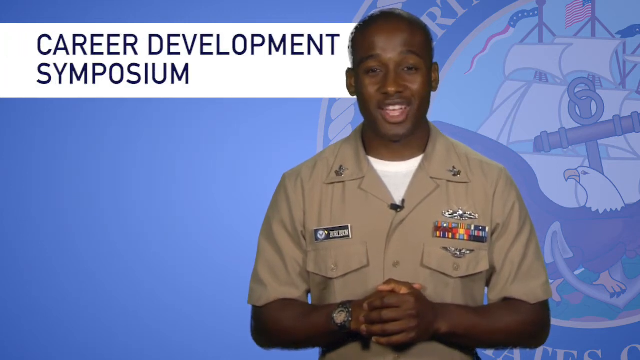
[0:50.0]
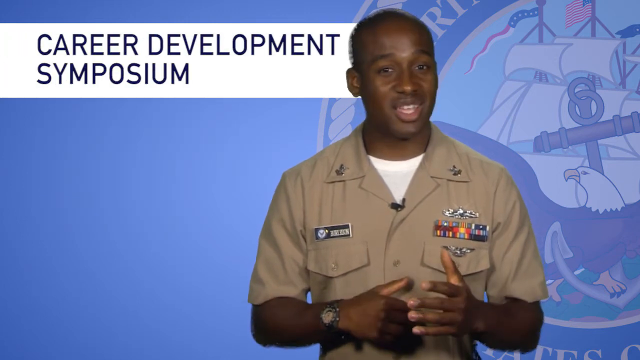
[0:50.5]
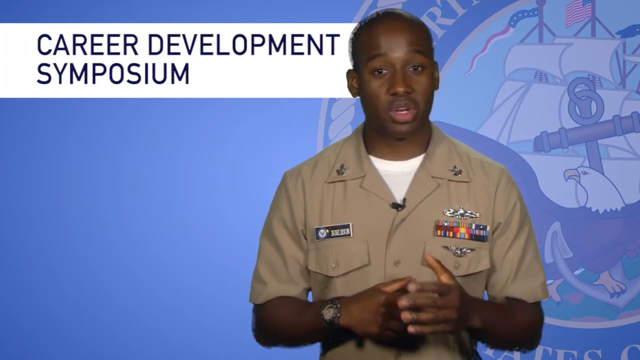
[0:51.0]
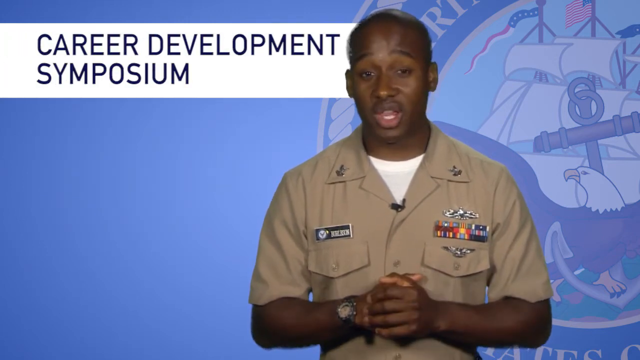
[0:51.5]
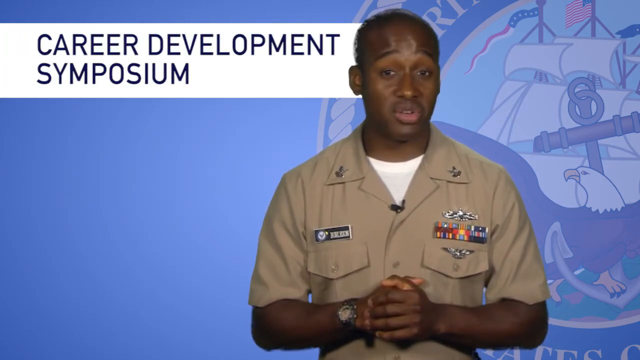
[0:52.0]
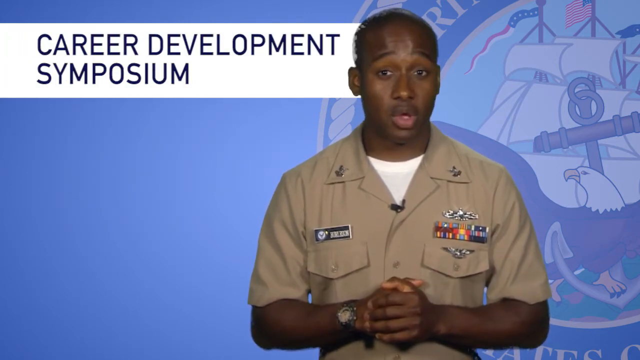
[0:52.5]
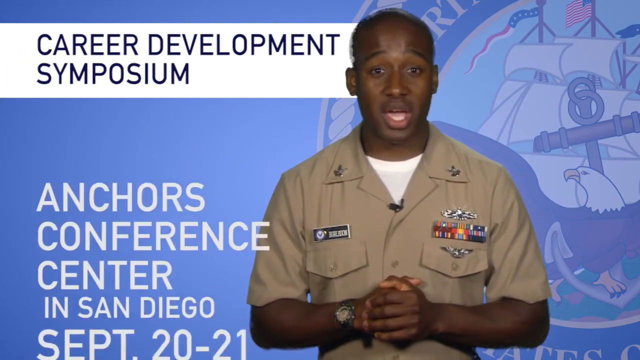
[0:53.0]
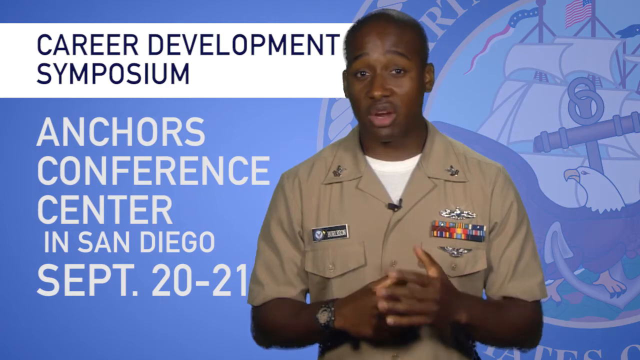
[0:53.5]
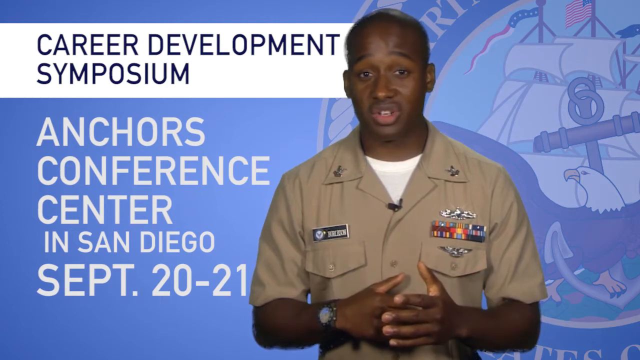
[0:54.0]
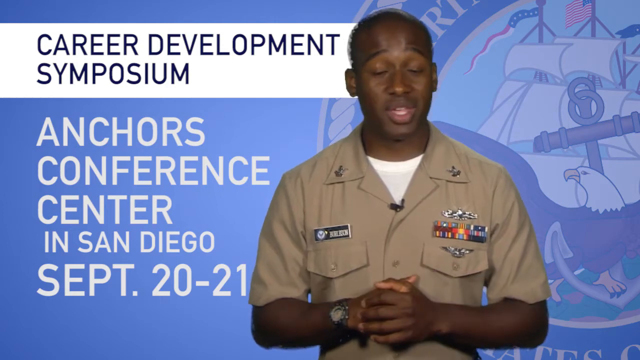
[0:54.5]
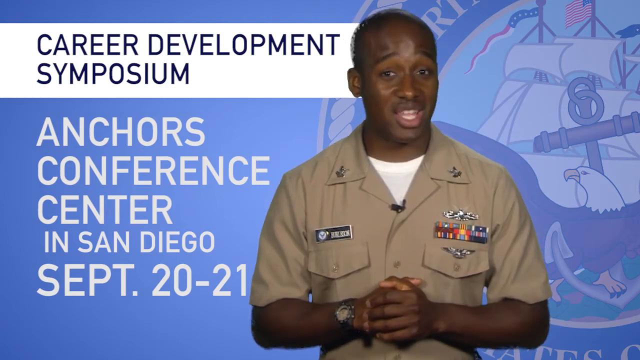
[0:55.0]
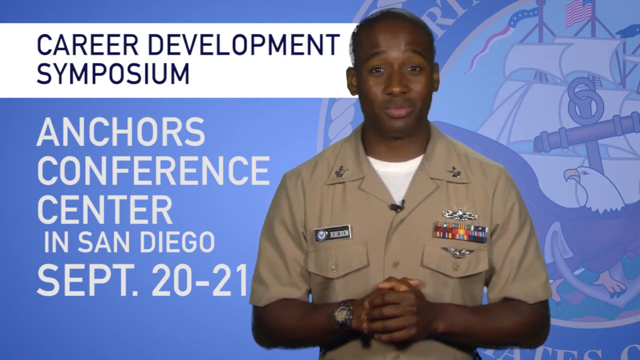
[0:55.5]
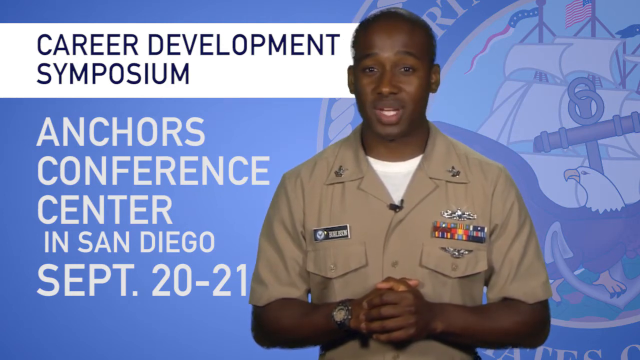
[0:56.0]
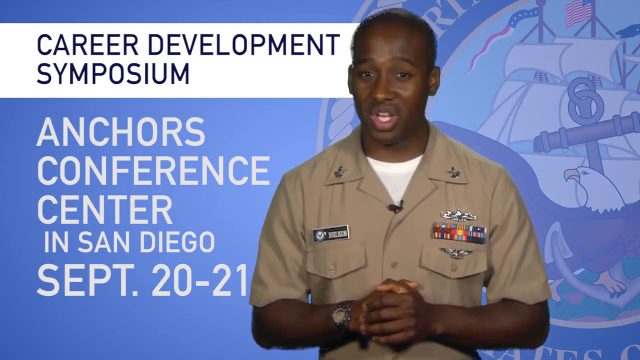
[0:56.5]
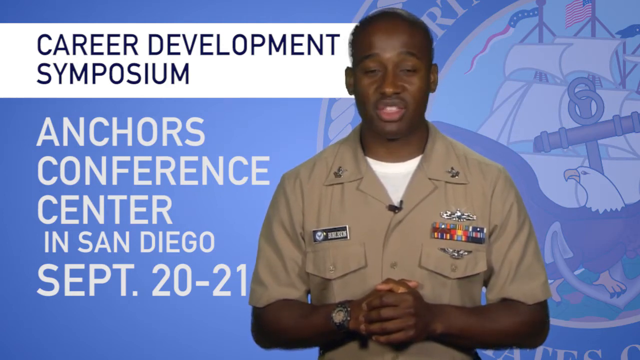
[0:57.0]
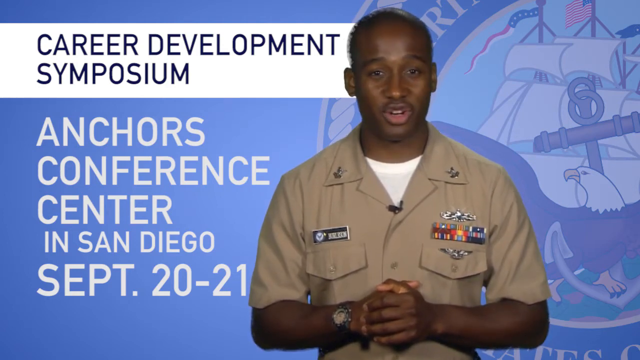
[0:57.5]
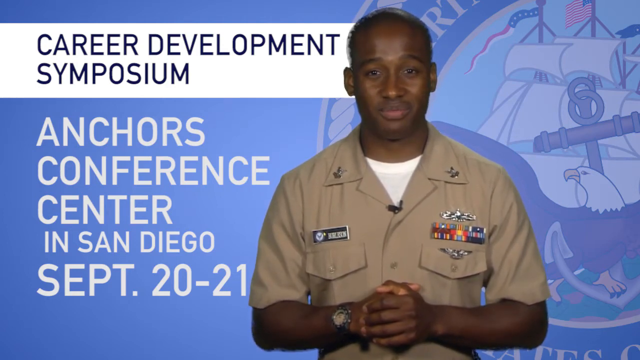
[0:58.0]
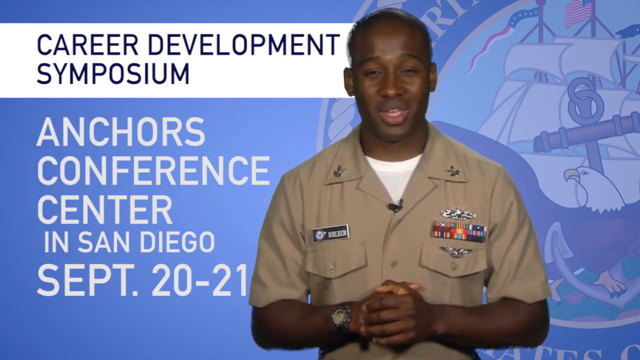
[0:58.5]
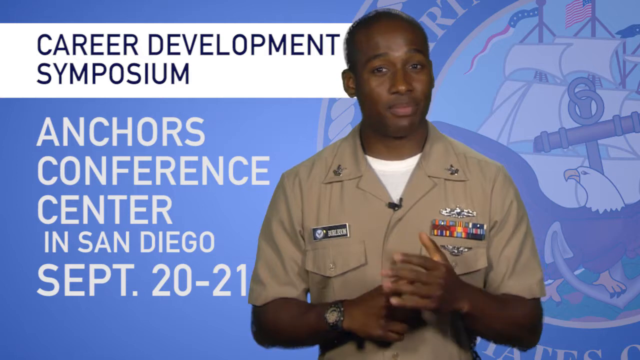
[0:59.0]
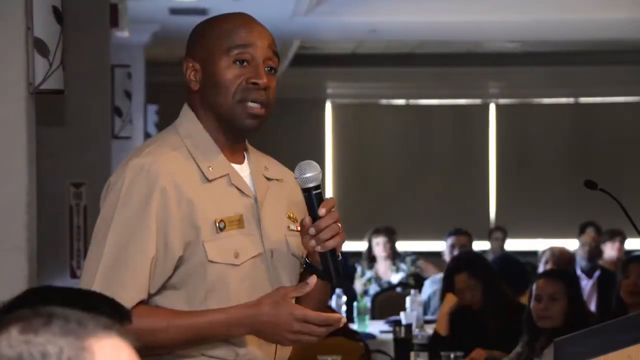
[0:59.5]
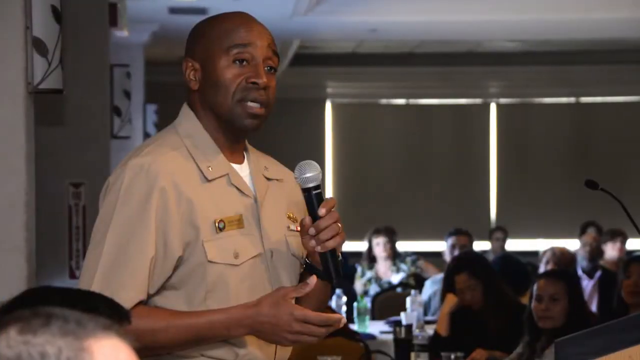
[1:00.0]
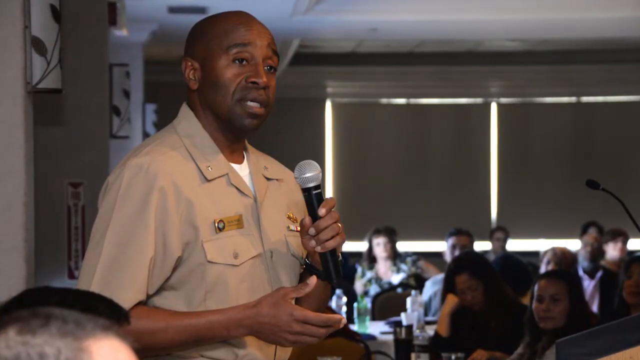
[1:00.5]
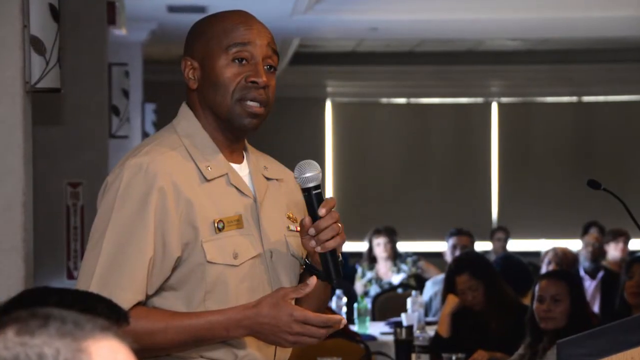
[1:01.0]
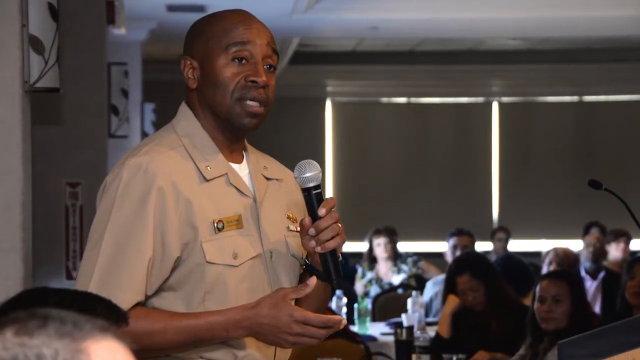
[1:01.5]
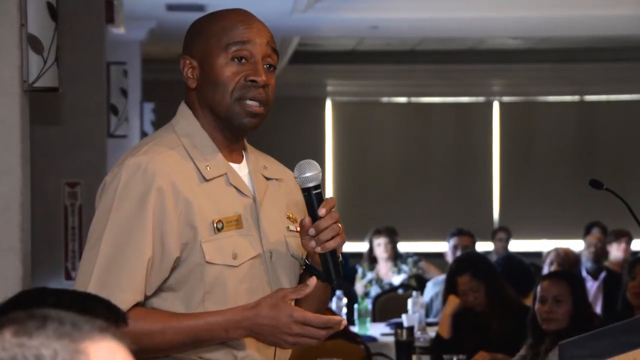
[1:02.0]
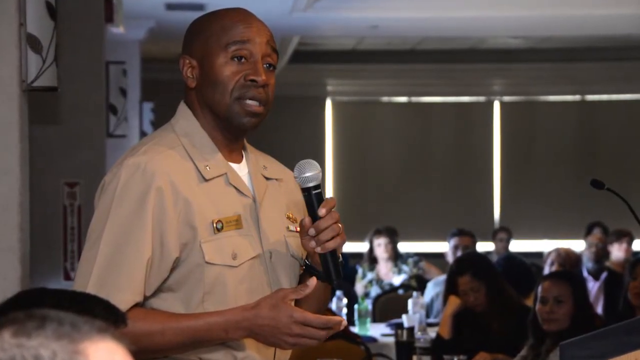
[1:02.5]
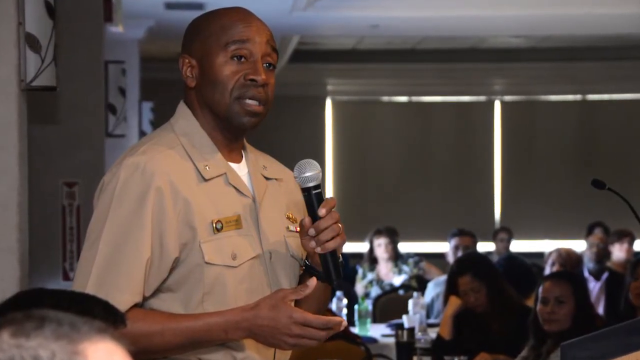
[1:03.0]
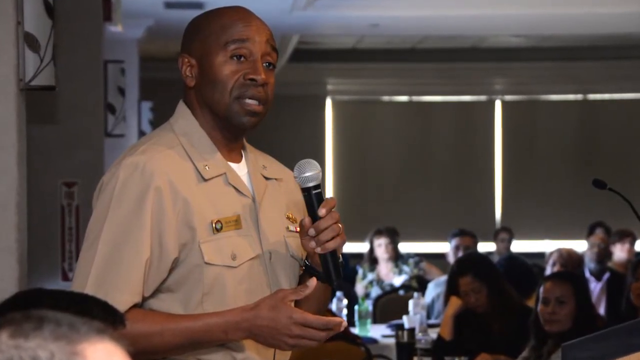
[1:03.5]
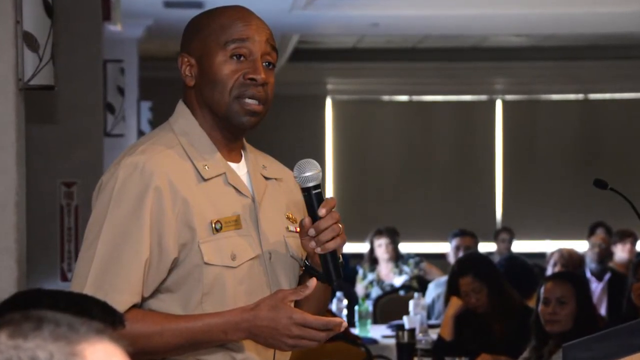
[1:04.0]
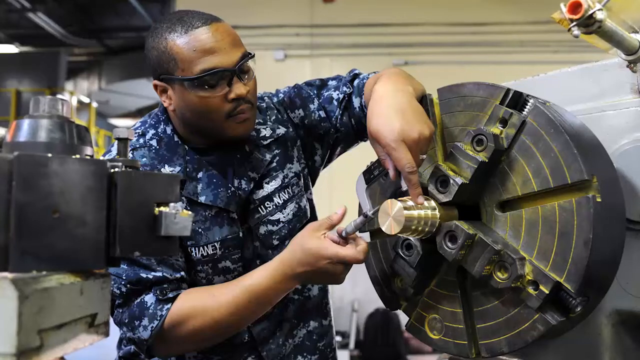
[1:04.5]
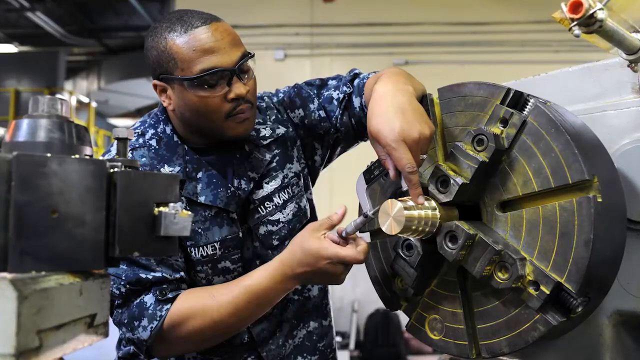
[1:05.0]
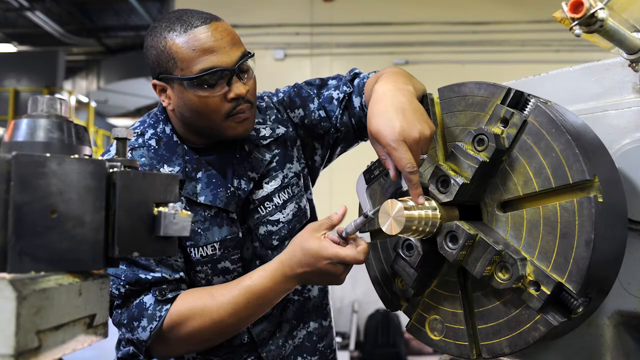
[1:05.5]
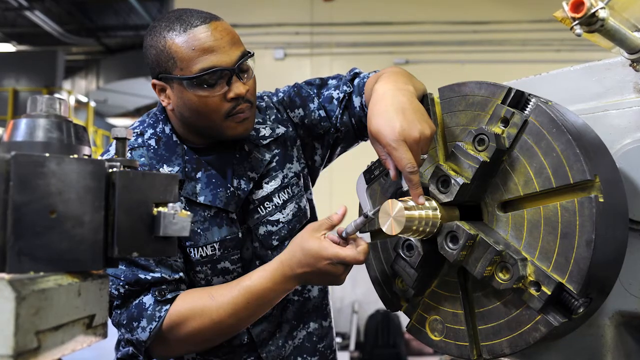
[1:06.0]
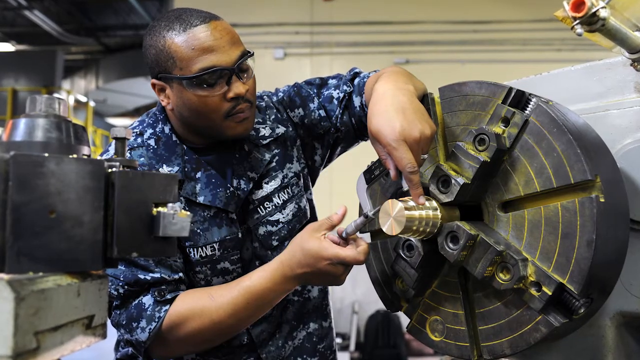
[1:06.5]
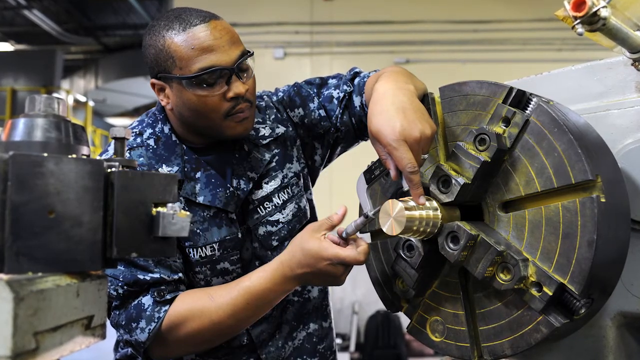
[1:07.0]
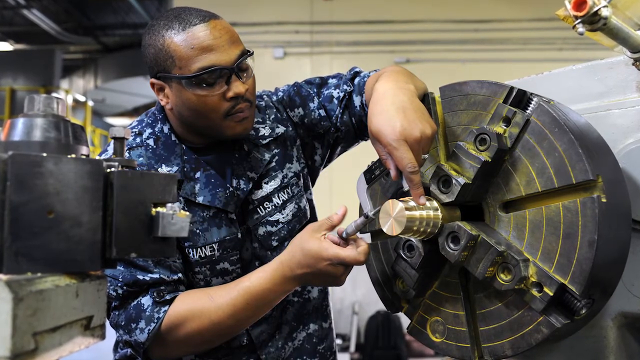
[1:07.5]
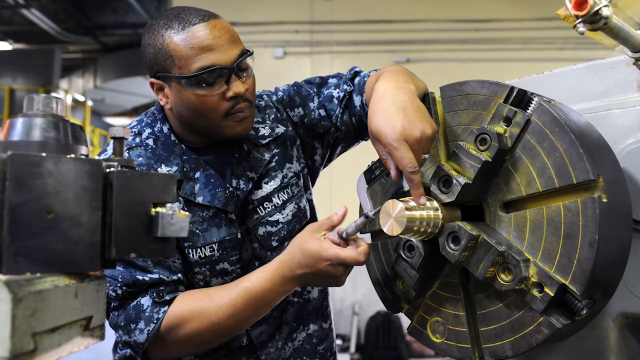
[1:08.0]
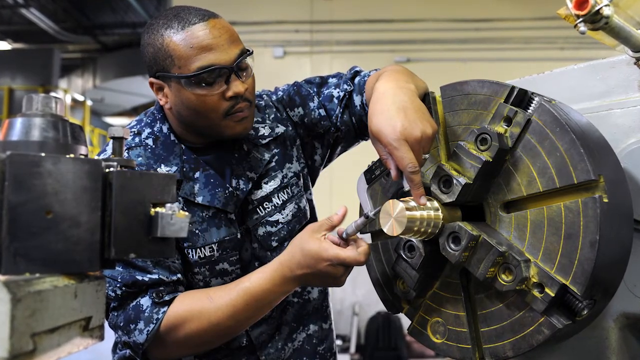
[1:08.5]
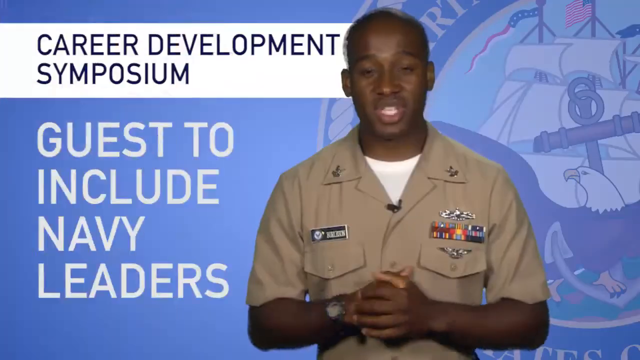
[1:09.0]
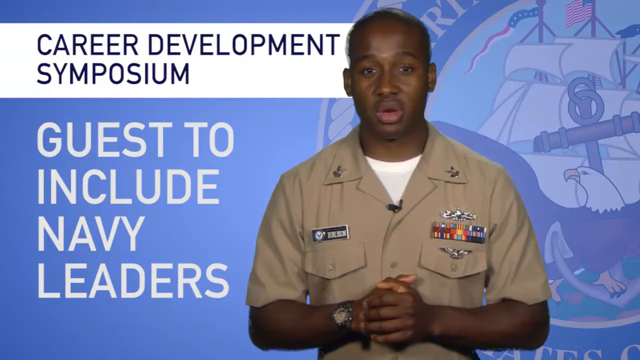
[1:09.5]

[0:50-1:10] A heading reads "Career Development Symposium", and underneath is text naming a conference center "in San Diego, September 20-21". Next, another black man in a khaki shirt, who seems to be elderly, addresses people while standing at the front. He holds a microphone in his left hand and stands in front of a crowd of people who are looking at him. He also has badges on both of his pockets. Then another man appears, busy fixing something and wearing protective glasses. He is part of the U.S. Navy, wearing a U.S. Navy uniform with "U.S Navy" written on the pocket of his top.